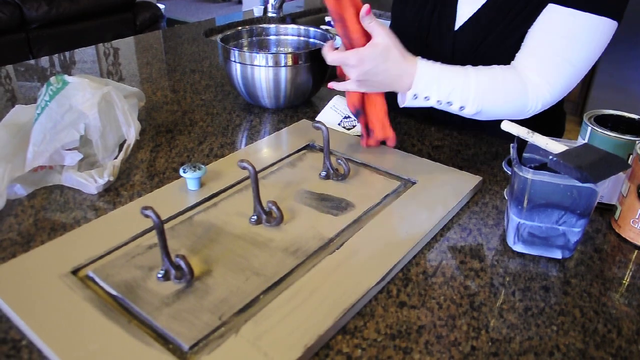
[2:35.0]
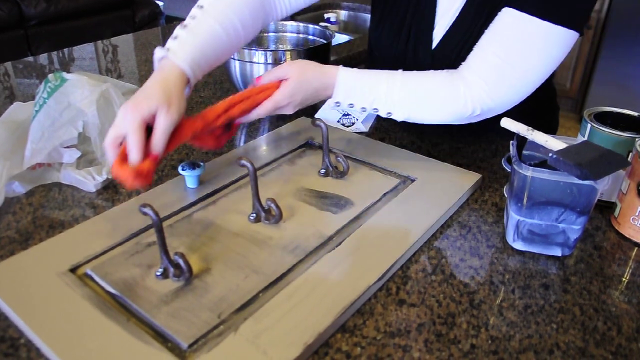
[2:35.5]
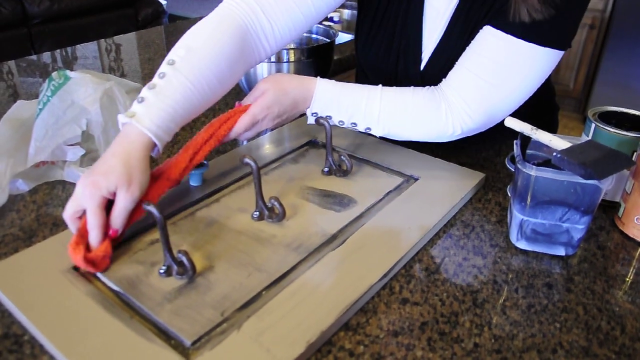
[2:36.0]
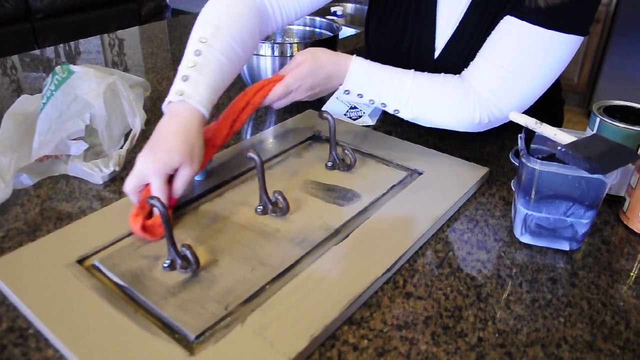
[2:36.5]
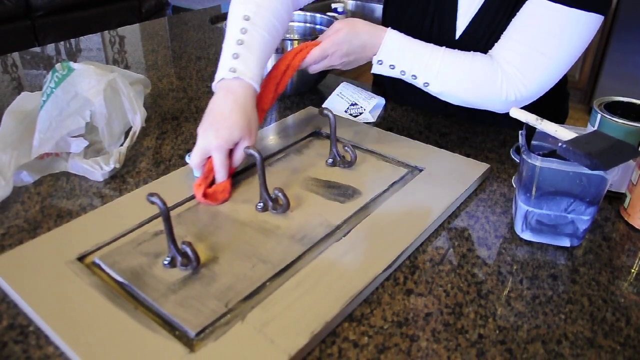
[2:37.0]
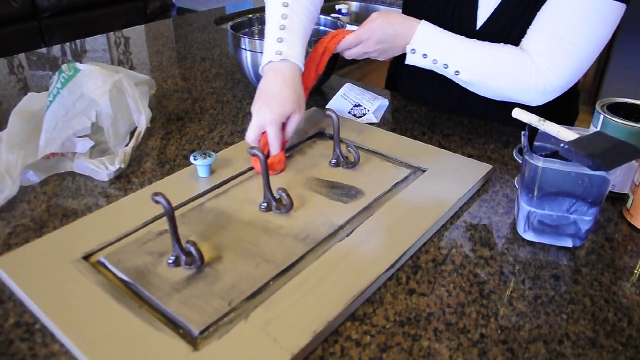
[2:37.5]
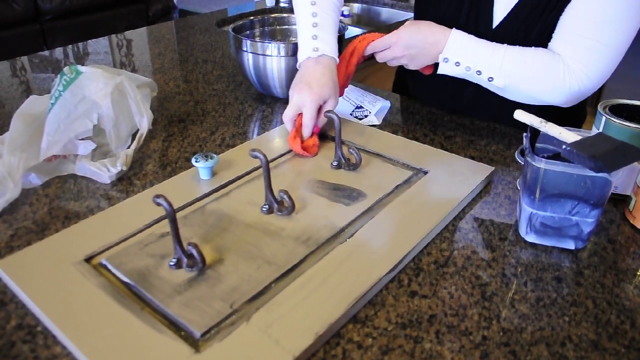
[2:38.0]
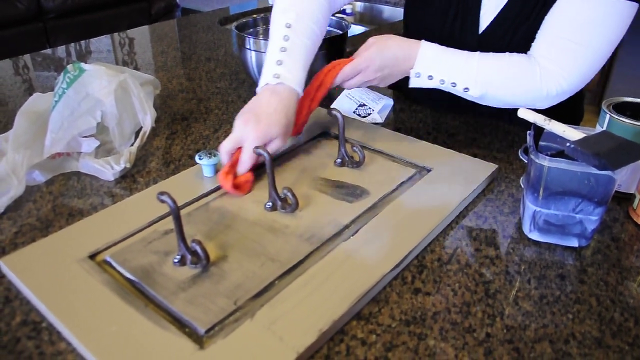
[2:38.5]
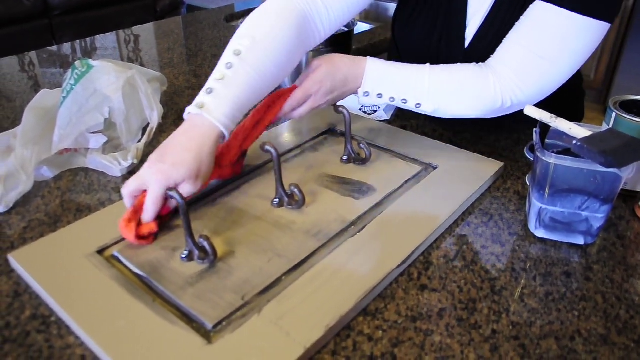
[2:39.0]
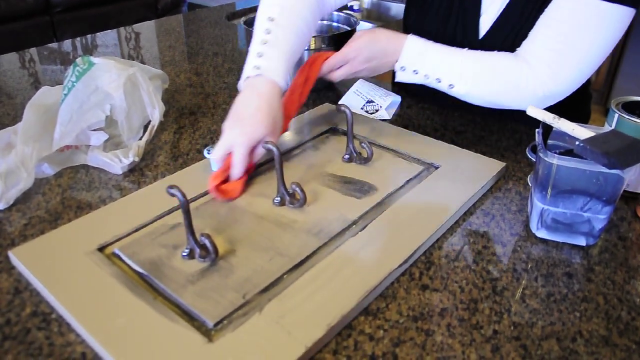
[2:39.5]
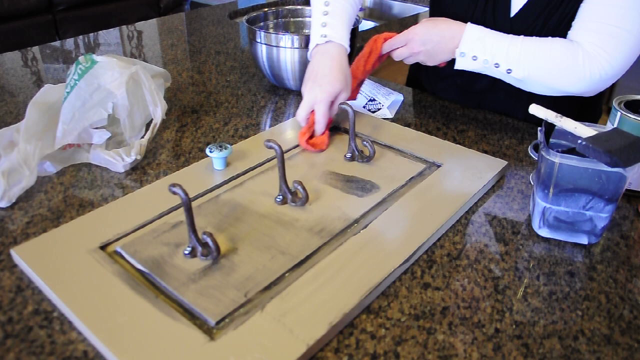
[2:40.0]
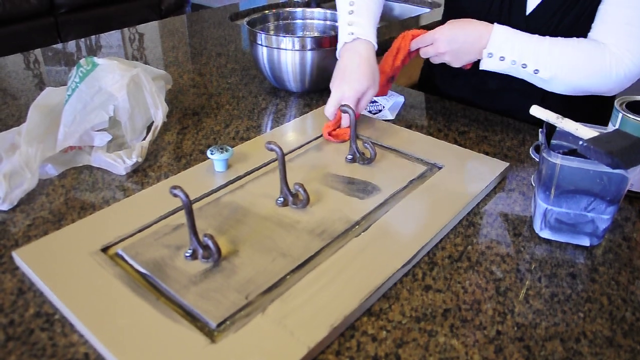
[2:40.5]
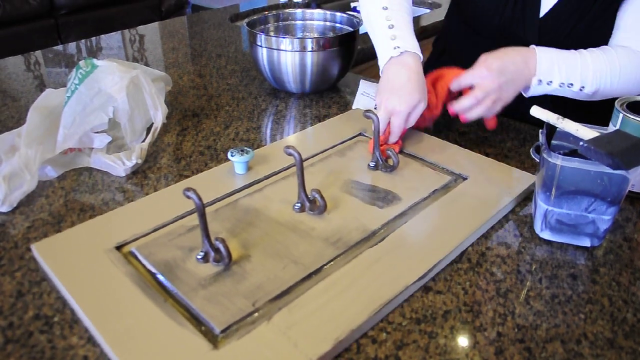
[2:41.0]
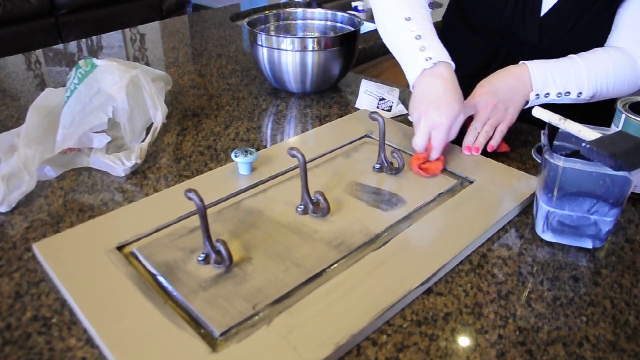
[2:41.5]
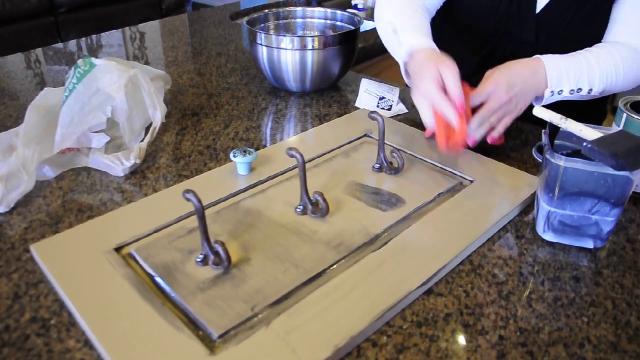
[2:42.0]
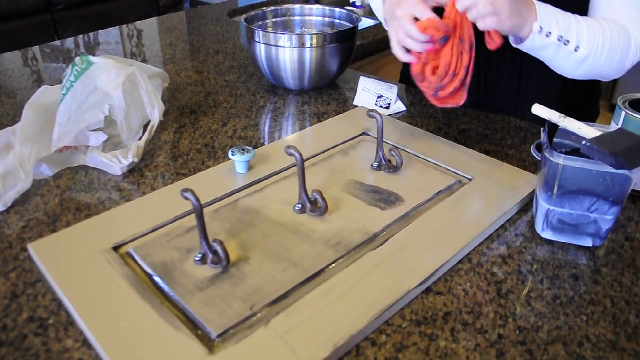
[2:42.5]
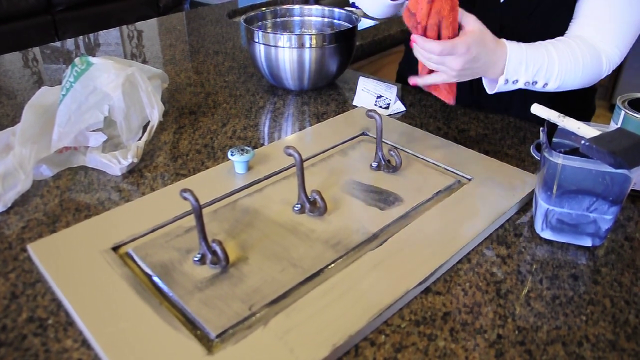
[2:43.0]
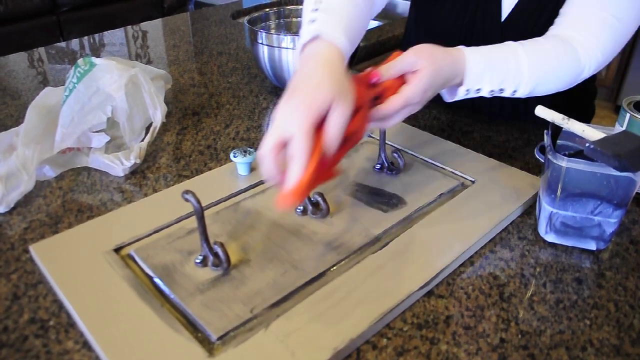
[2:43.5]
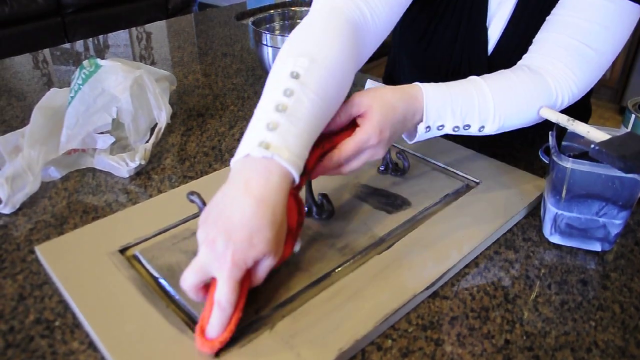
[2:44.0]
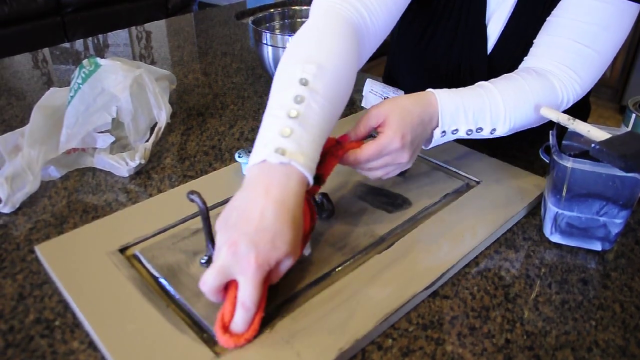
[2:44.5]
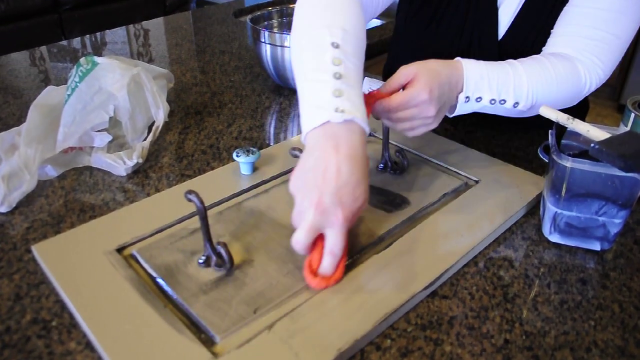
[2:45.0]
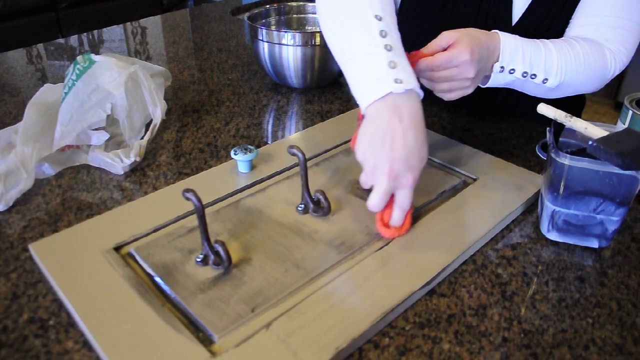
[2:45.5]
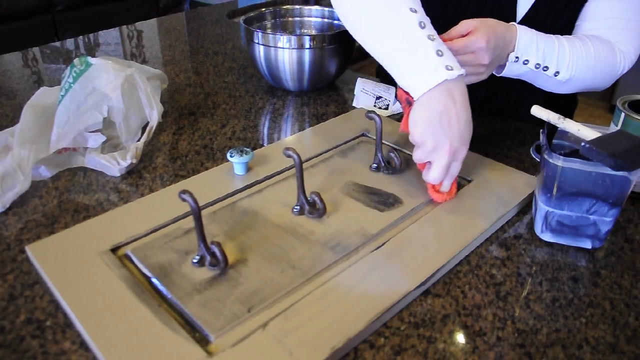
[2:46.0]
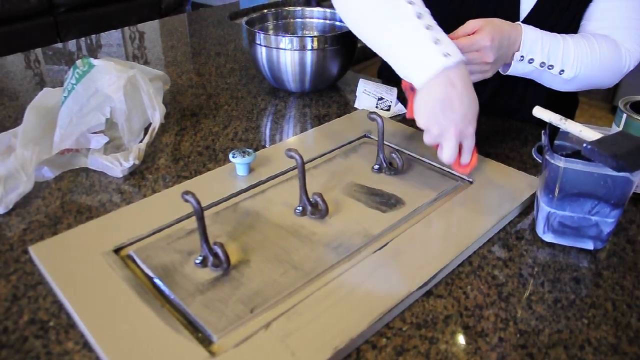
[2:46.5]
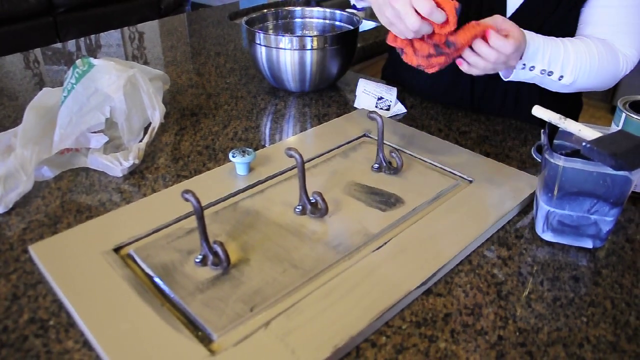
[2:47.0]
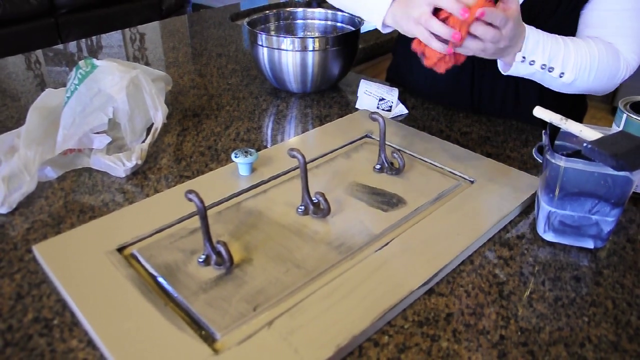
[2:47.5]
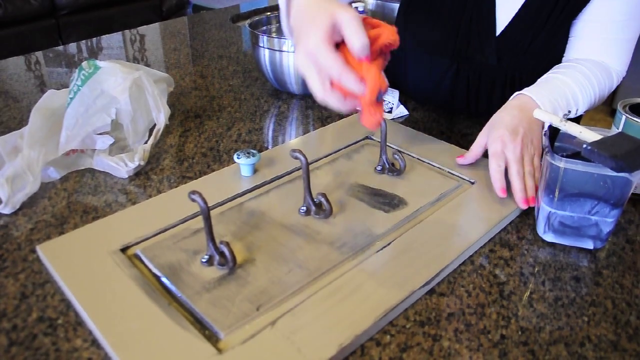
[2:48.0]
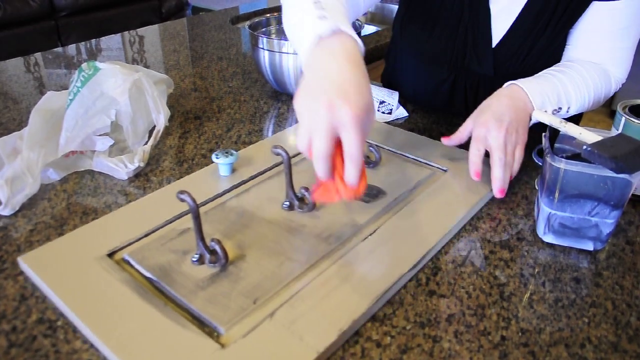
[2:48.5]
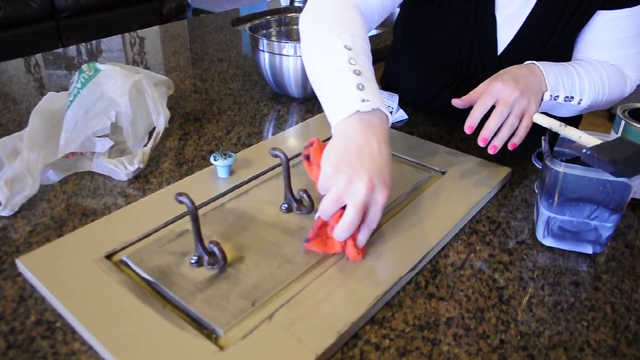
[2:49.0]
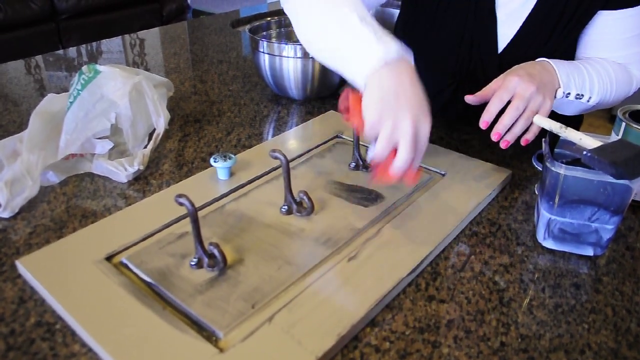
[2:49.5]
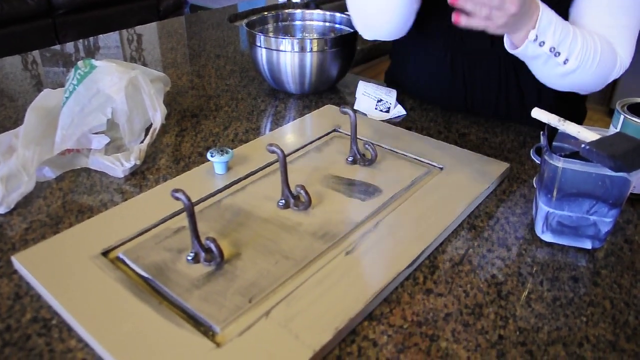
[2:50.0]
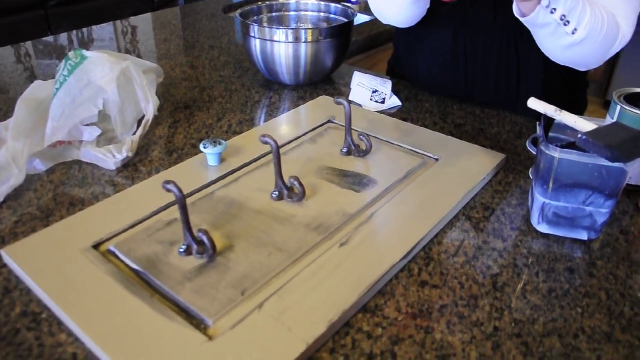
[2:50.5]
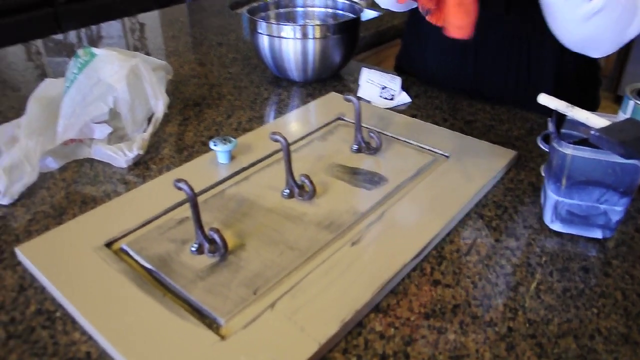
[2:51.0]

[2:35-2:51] A woman, whose face is not visible, only her hands, uses a red cloth to take glaze out of a groove carved into a rectangular piece of wood. The groove forms a perimeter around three hooks attached to the wood. Using two hands, she holds the back of the cloth with one and presses a finger of the other into it to wipe the glaze out of the grooves. The wood slides around the counter a little; the counter is marbled with kind of black, brown and goldish tones. On the counter are two paint cans and a plastic container with the glaze, and a plastic bag lies on one part of the counter. A silver bowl in the background held water or some other liquid, which she dipped the red cloth in before working to remove the glaze. She works diligently the whole time to get the glaze off this area.